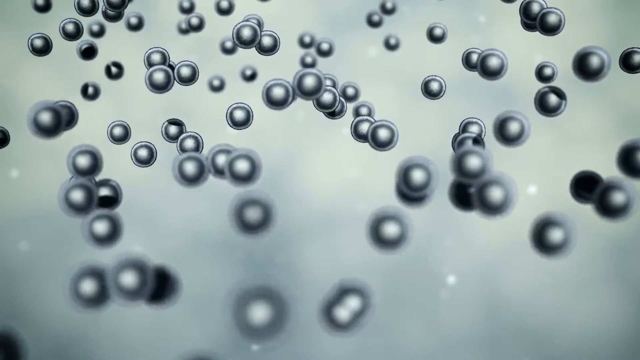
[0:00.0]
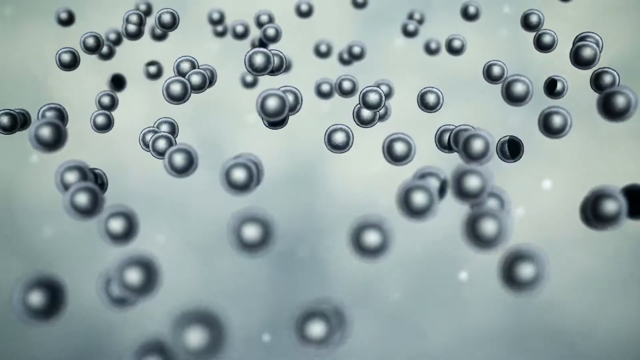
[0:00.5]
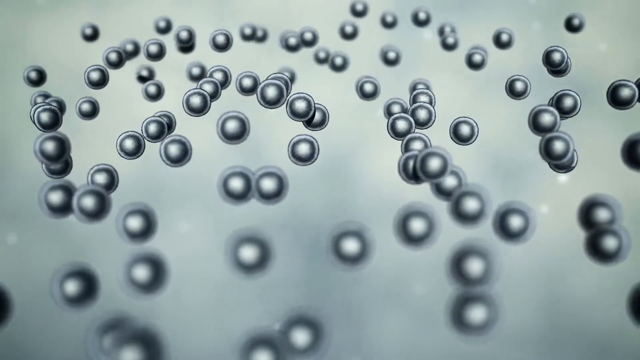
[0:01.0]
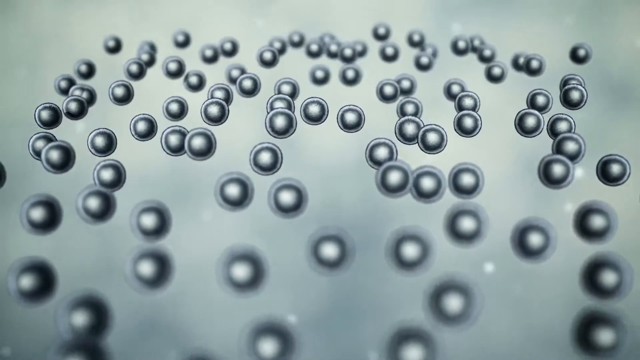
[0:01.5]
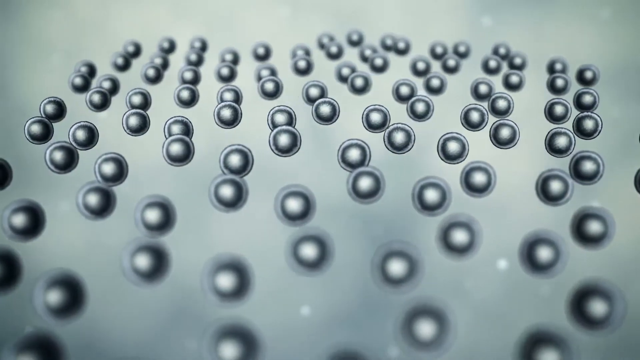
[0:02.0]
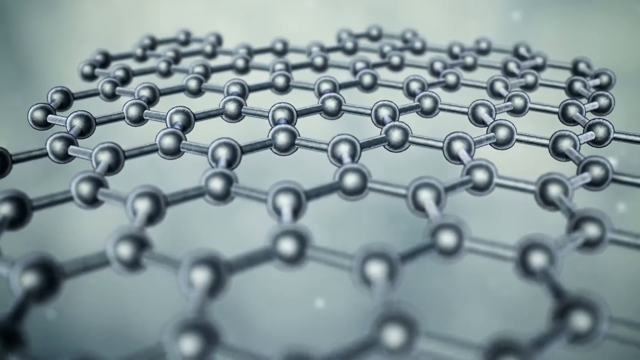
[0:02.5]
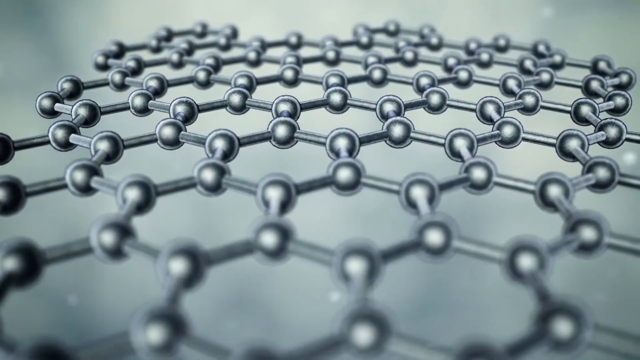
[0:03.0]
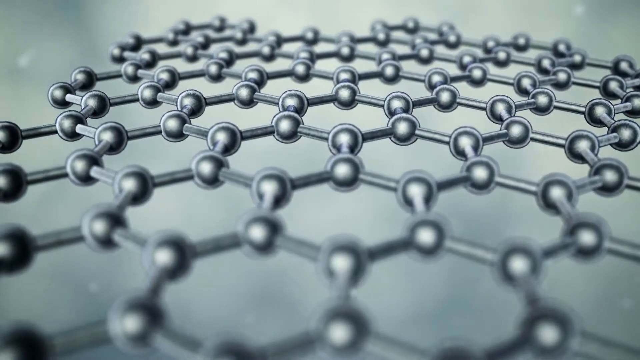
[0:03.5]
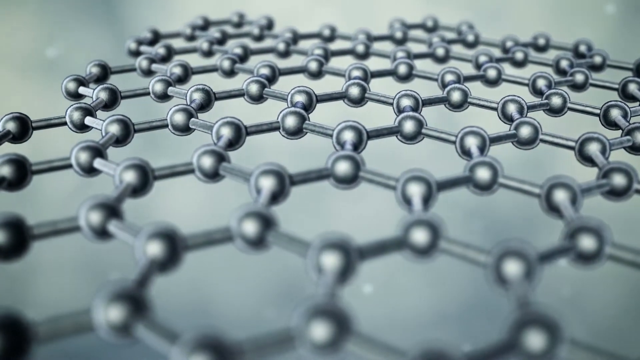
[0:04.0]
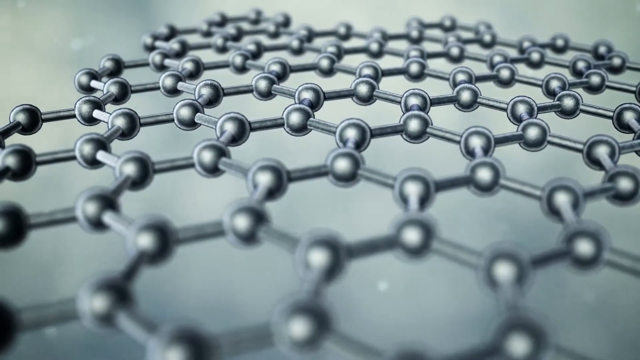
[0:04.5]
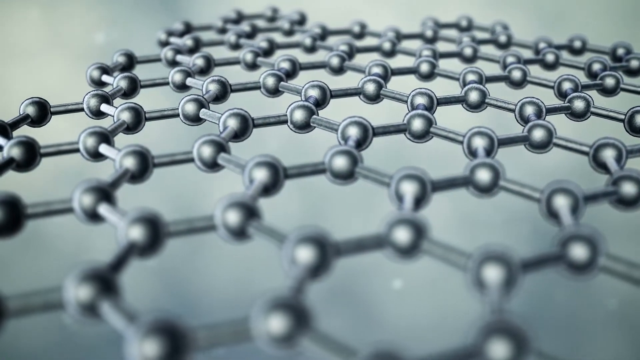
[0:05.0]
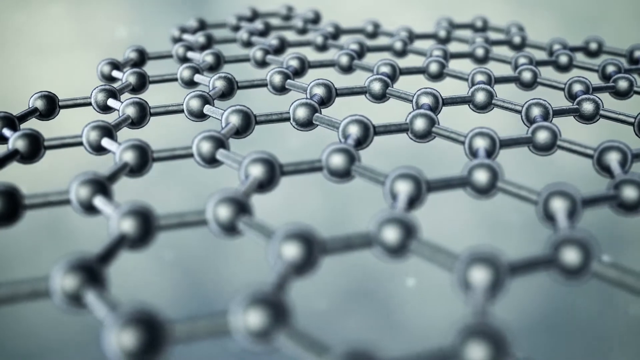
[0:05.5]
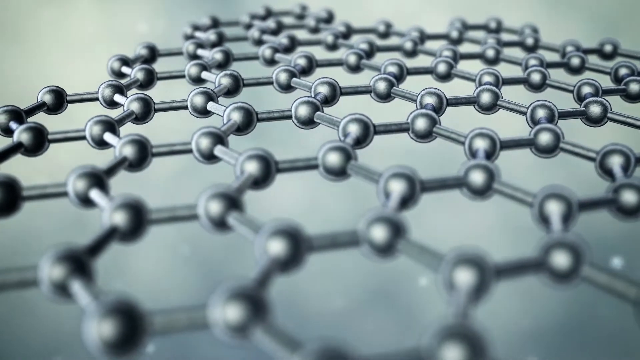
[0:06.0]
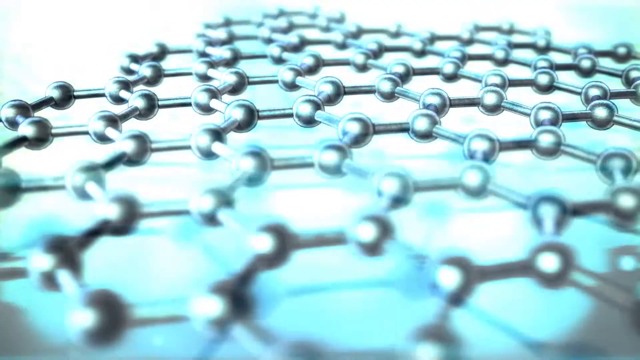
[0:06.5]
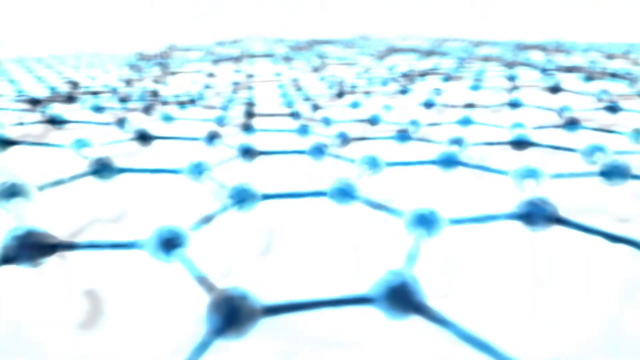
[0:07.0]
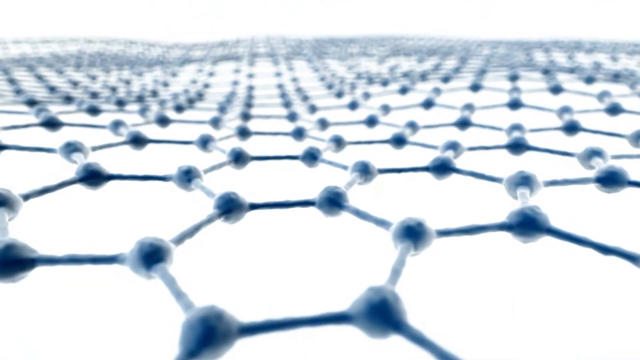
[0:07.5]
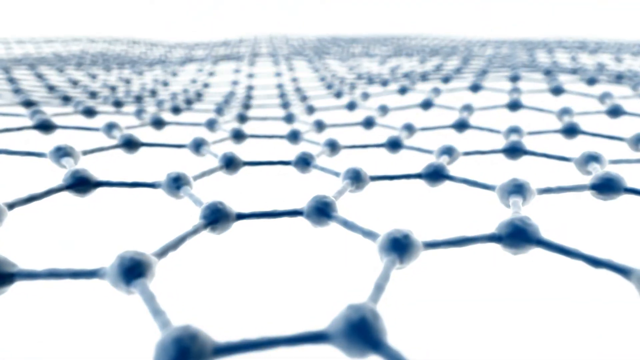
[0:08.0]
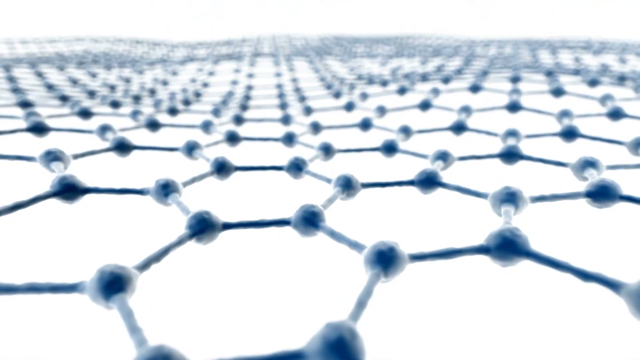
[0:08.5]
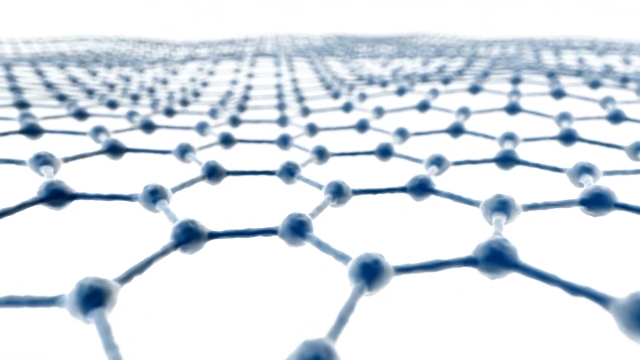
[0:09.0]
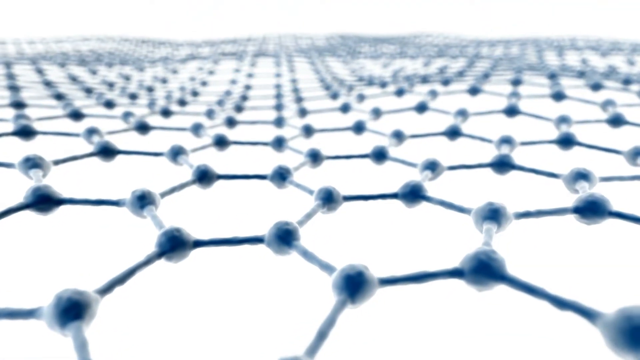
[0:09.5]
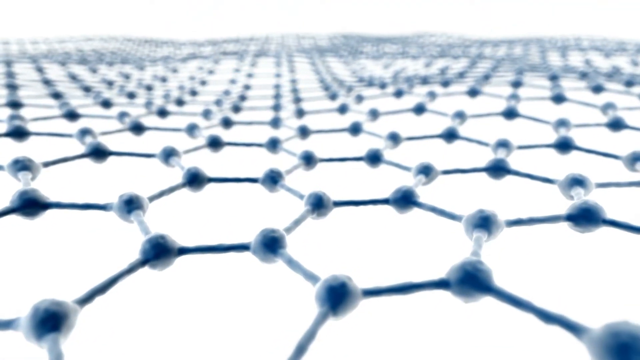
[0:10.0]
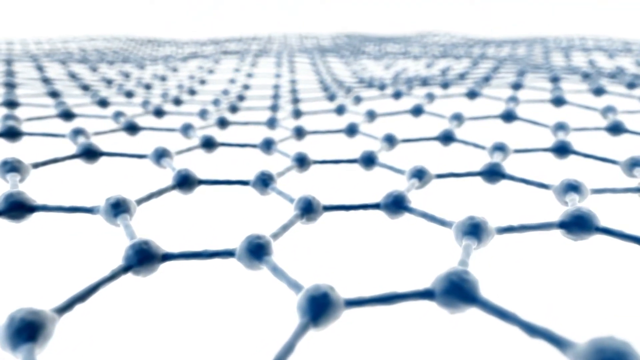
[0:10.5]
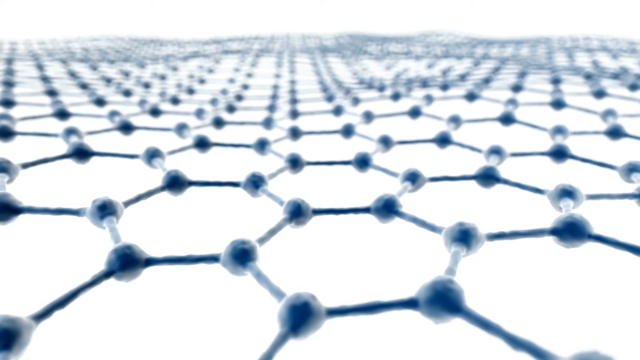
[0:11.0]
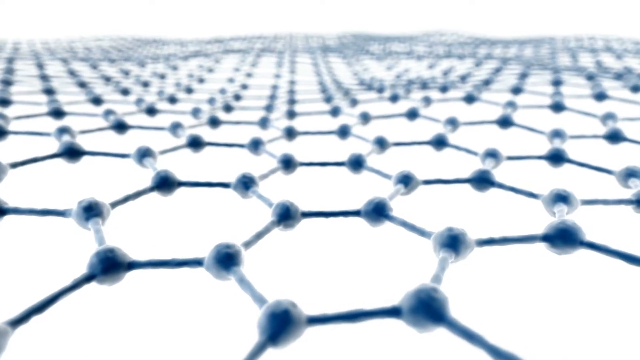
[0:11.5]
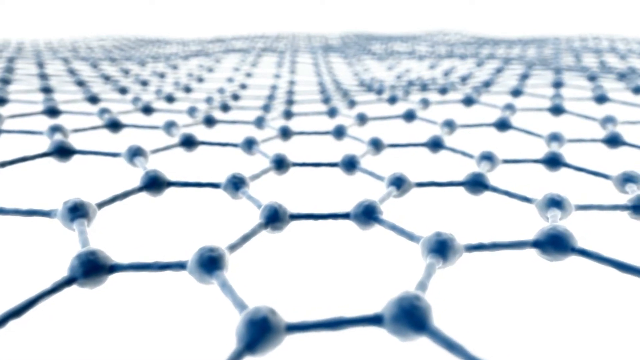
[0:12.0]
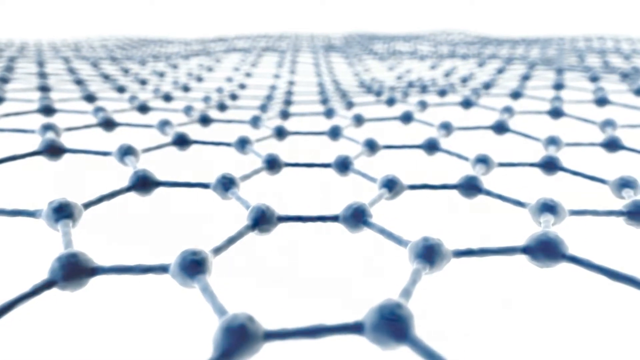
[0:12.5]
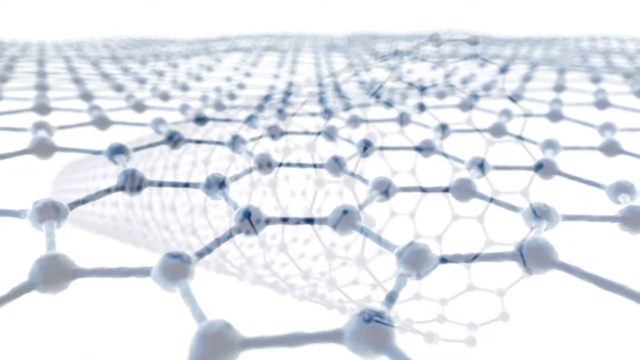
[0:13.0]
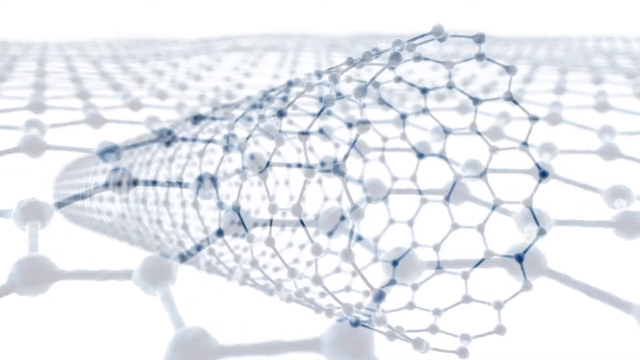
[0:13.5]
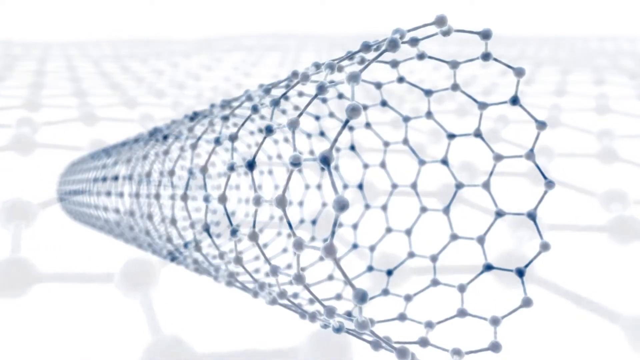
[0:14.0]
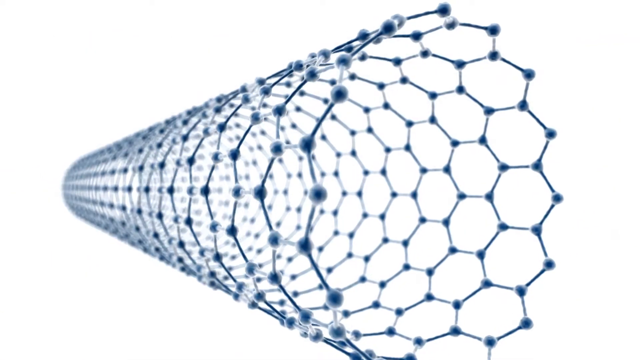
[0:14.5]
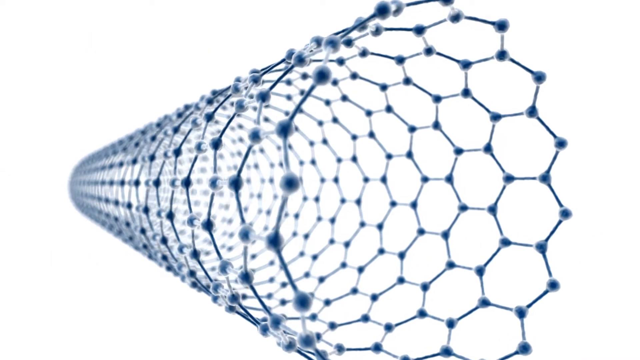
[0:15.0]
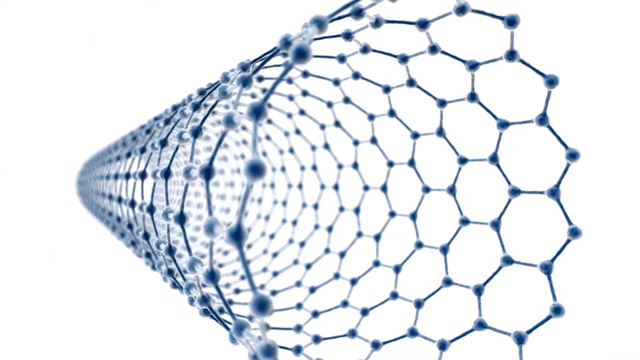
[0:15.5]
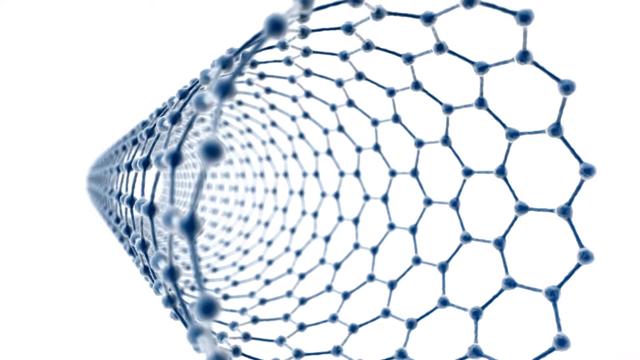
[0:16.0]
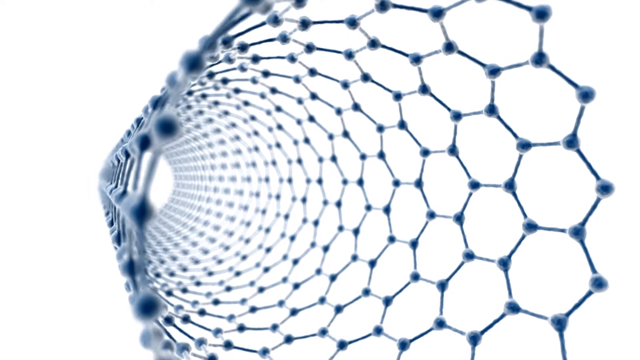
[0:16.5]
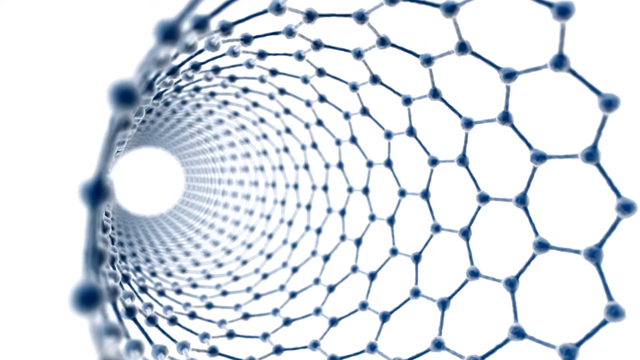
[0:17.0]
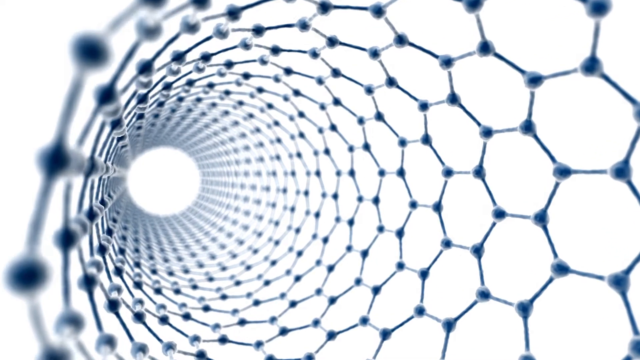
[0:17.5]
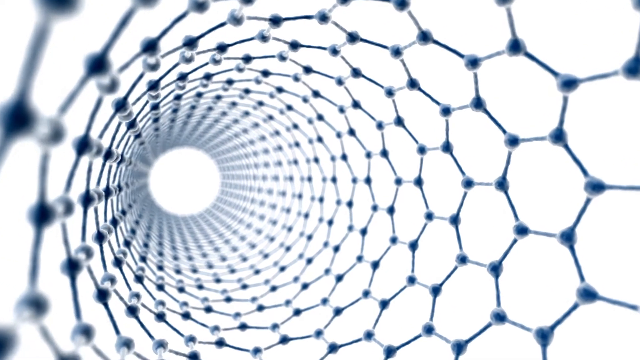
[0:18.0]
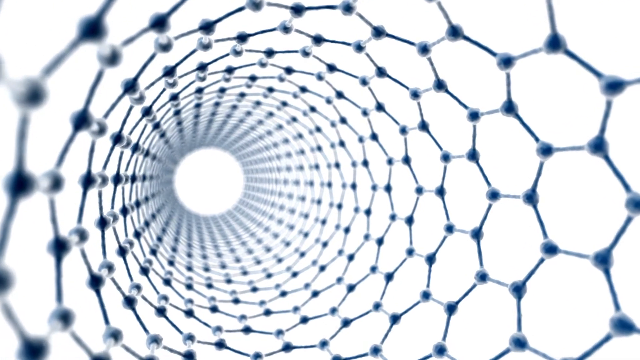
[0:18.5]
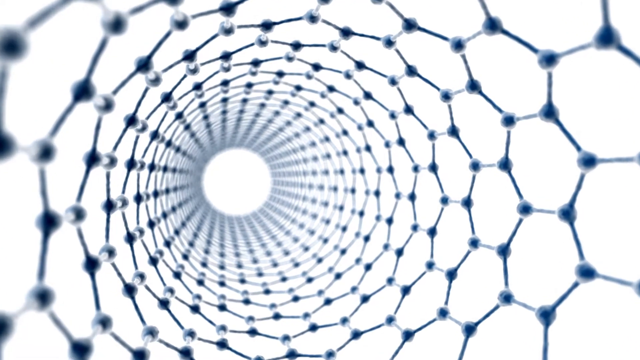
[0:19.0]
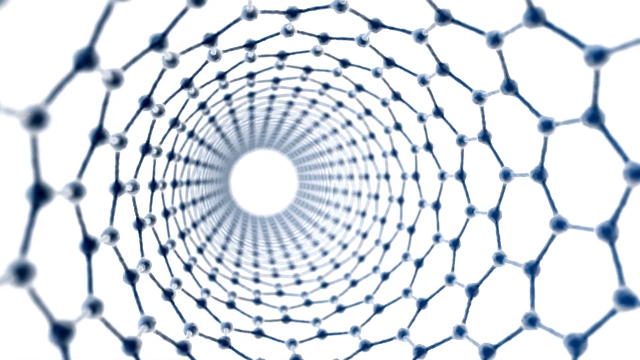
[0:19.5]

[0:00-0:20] The video opens on a design effect with a gray background and many very small gray circular molecules that move to create a honeycomb-like pattern, all linked together. The camera slowly rotates, then the screen changes and lots of blue light appears. Chain-link, honeycomb-shaped patterns of balls and lines extend very far back, and they are all flat. Next, the linked molecules form a cylinder shape, almost like a hollow tree log, made of honeycomb shapes against a white background. The camera goes to the right and shows the inside of it, as if looking through a tunnel, and the far end of the tunnel is just a white circle.